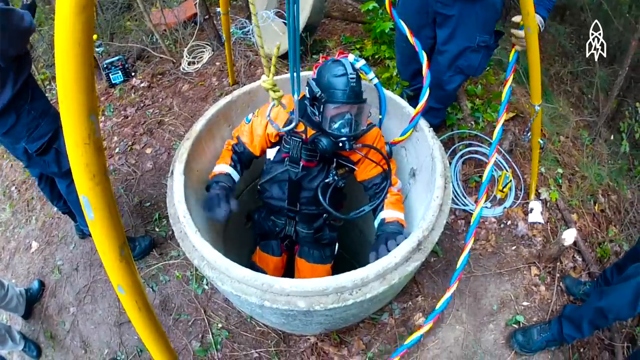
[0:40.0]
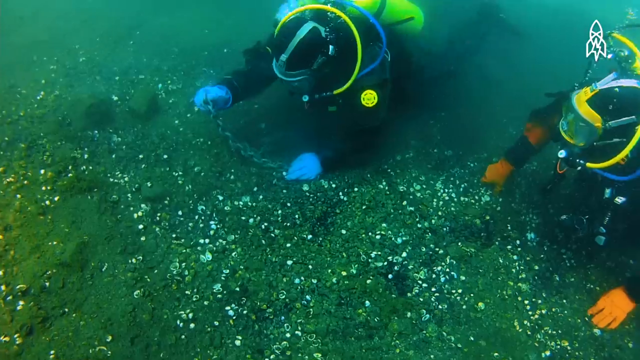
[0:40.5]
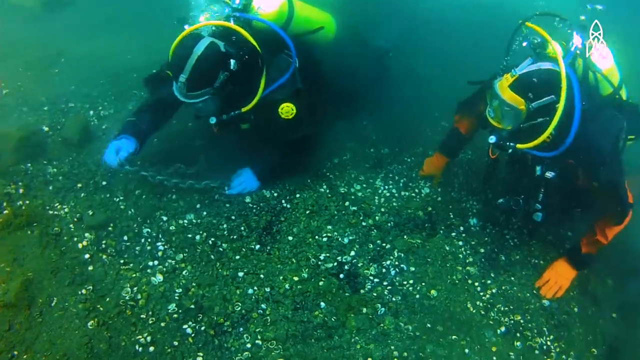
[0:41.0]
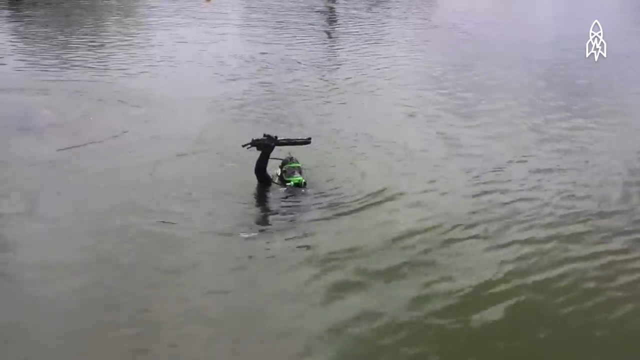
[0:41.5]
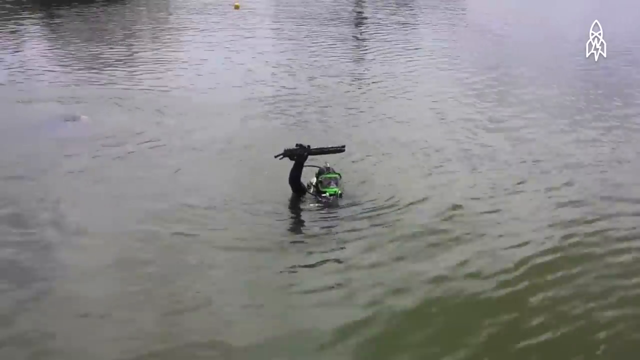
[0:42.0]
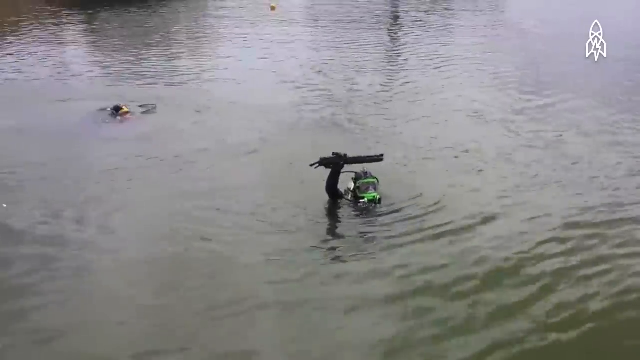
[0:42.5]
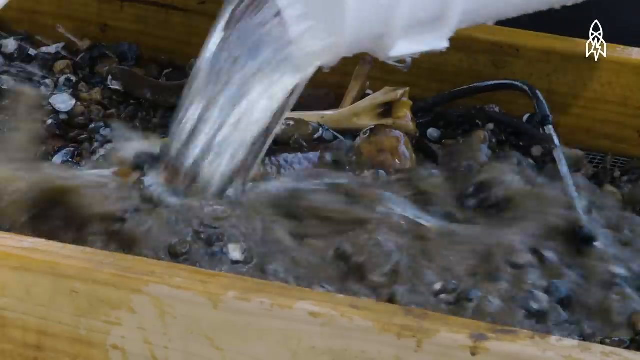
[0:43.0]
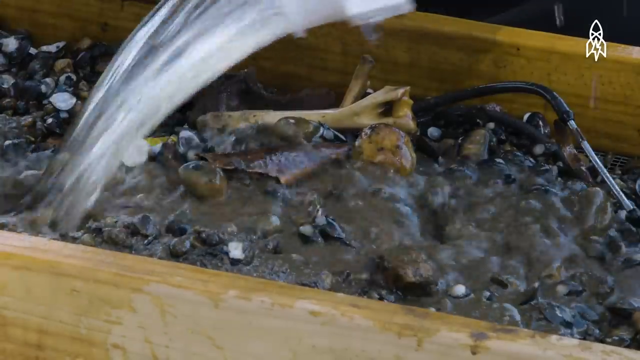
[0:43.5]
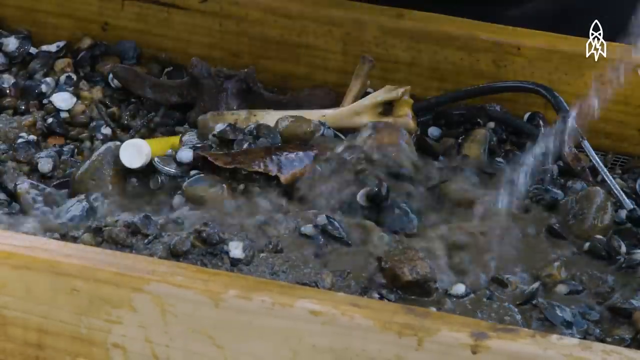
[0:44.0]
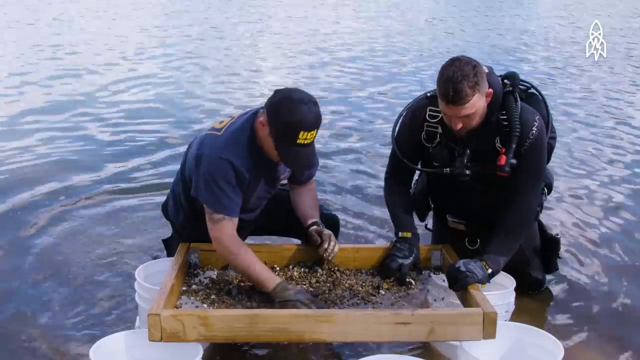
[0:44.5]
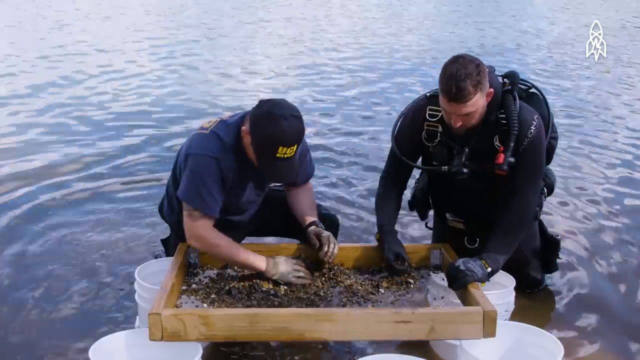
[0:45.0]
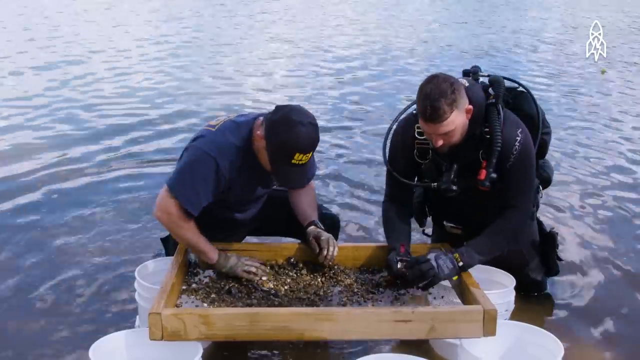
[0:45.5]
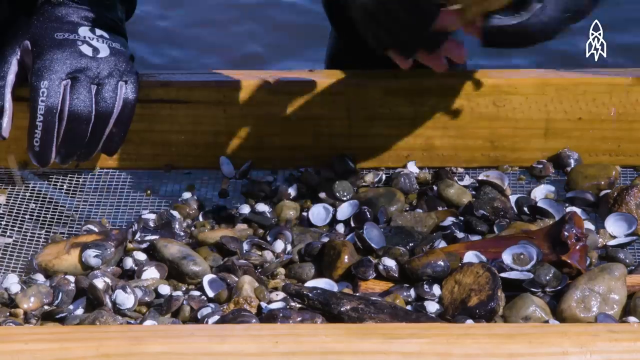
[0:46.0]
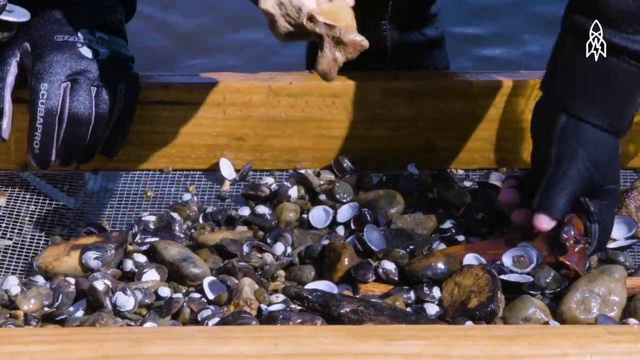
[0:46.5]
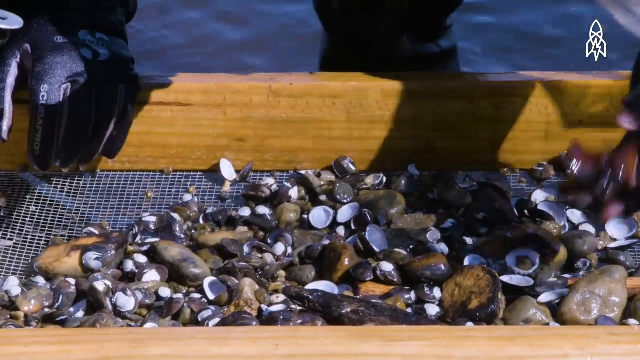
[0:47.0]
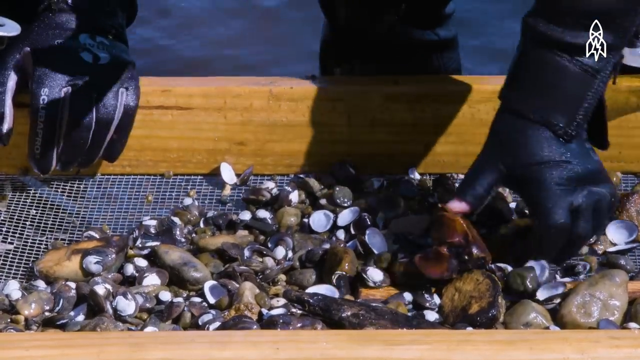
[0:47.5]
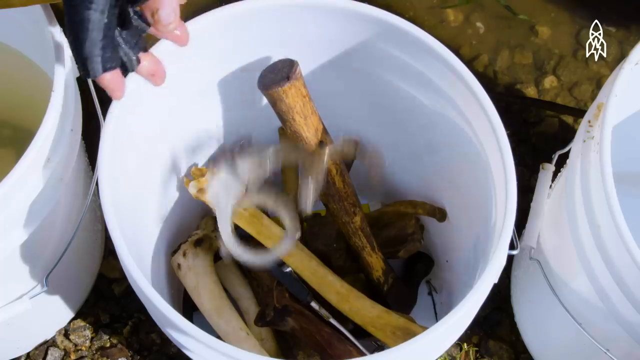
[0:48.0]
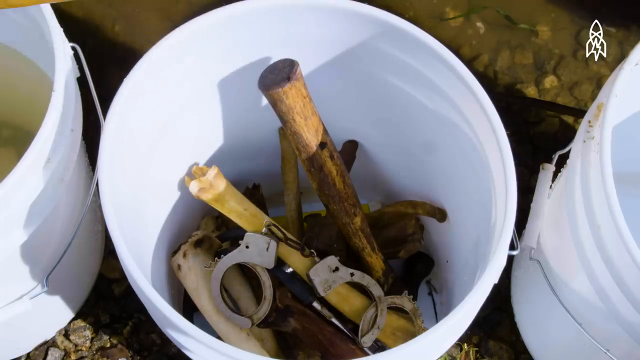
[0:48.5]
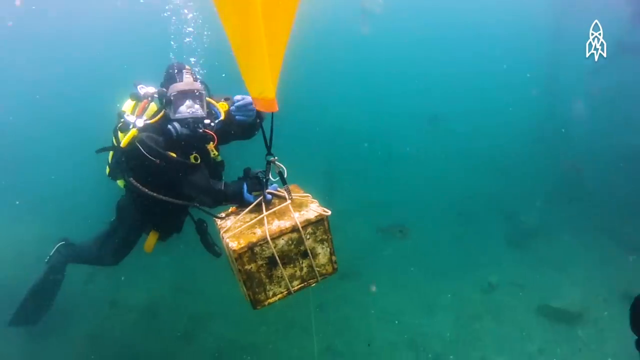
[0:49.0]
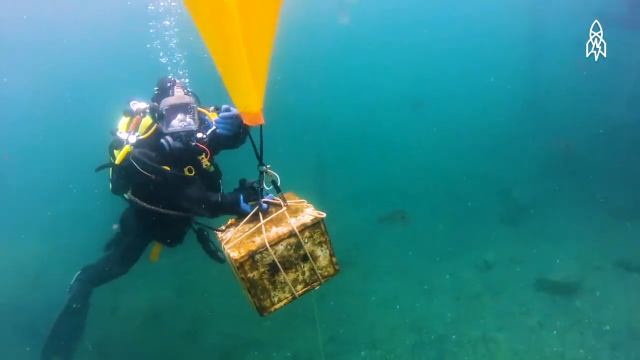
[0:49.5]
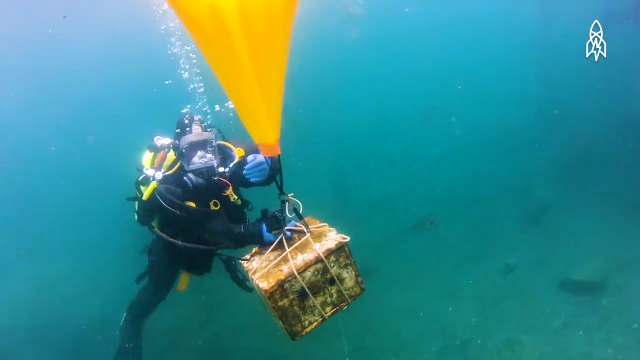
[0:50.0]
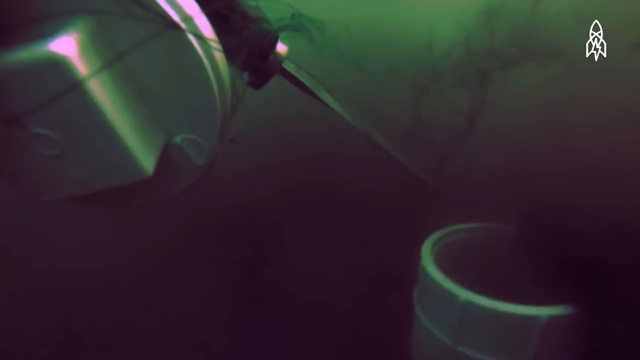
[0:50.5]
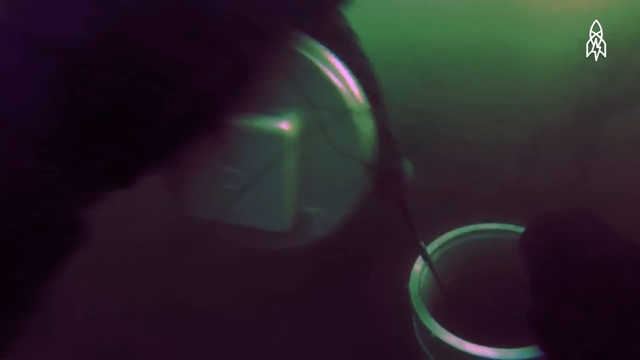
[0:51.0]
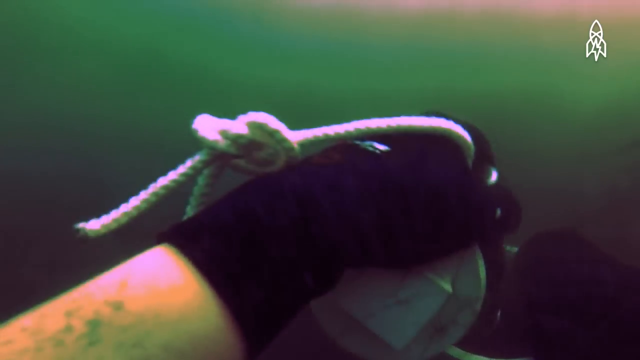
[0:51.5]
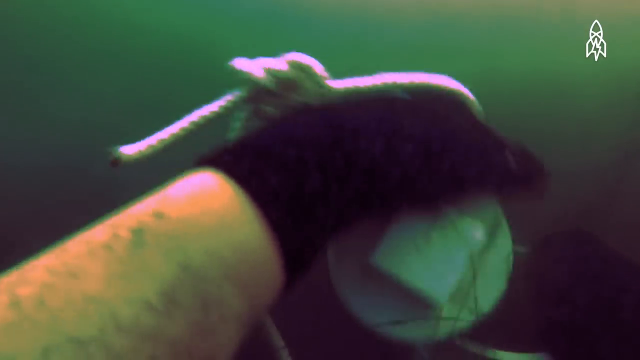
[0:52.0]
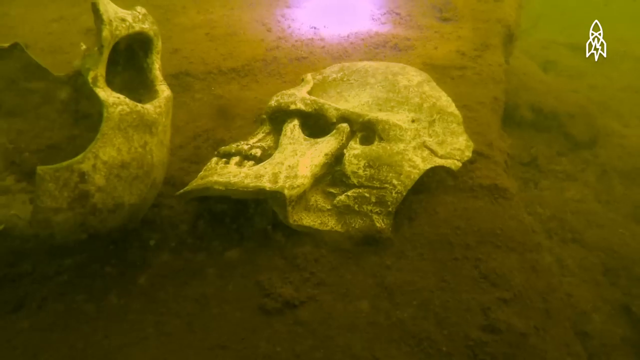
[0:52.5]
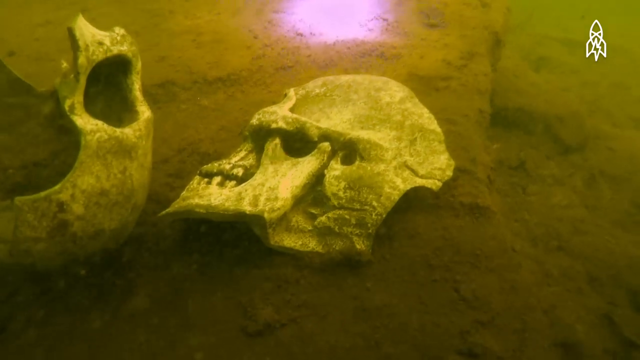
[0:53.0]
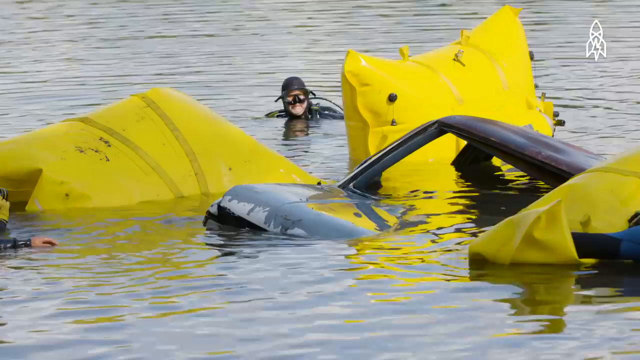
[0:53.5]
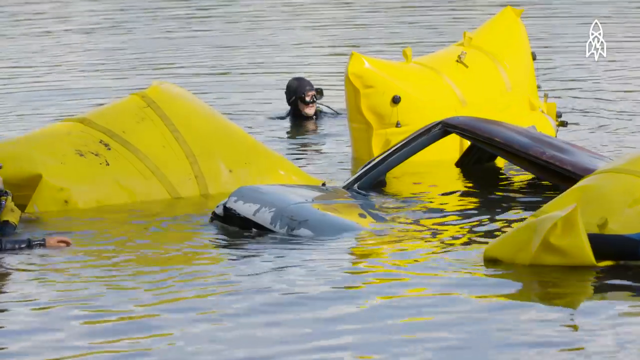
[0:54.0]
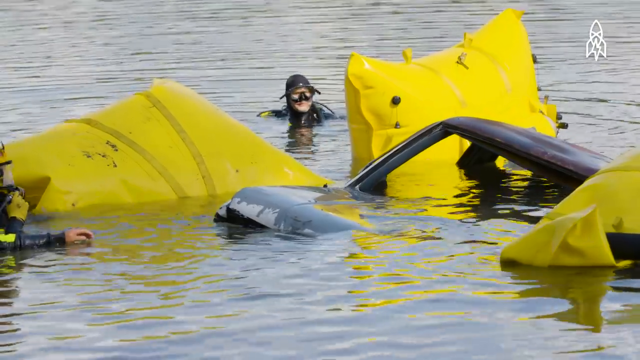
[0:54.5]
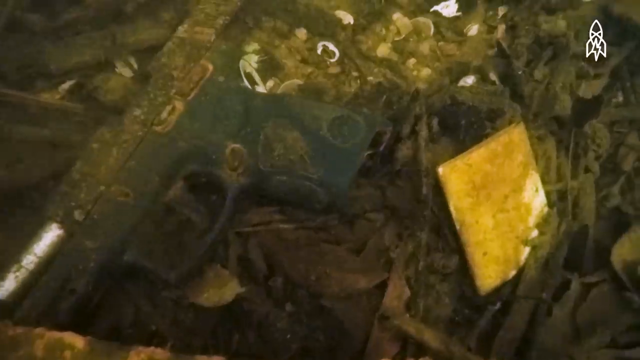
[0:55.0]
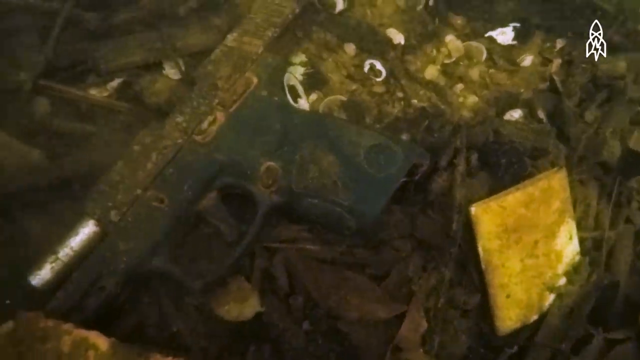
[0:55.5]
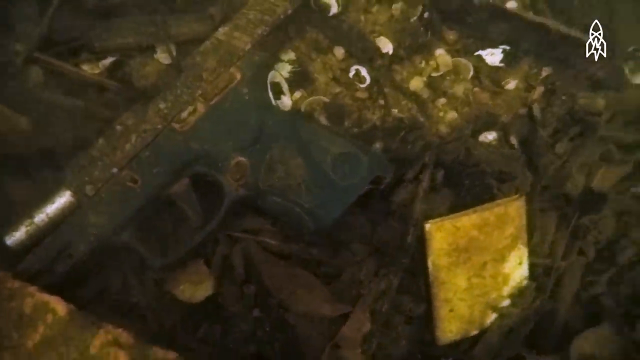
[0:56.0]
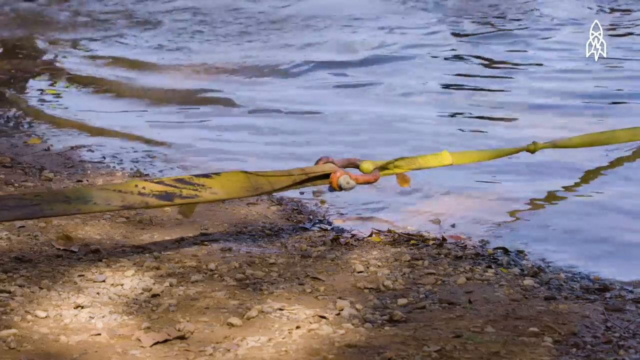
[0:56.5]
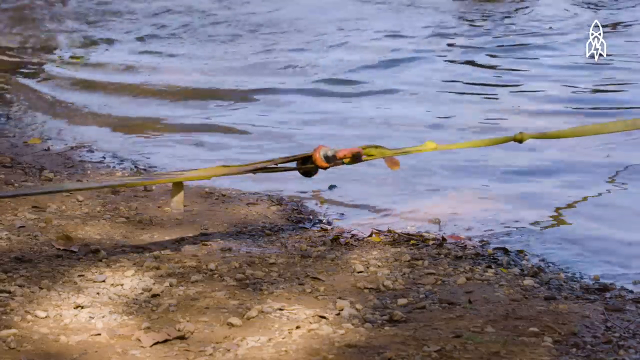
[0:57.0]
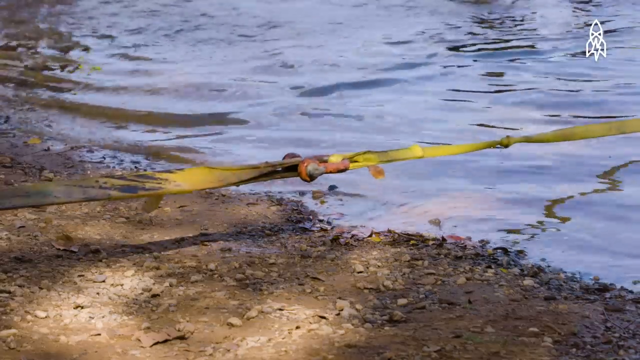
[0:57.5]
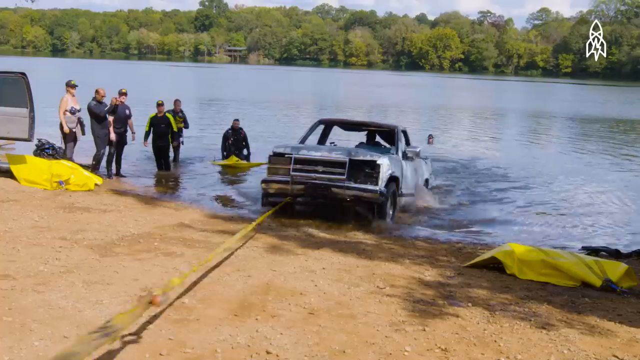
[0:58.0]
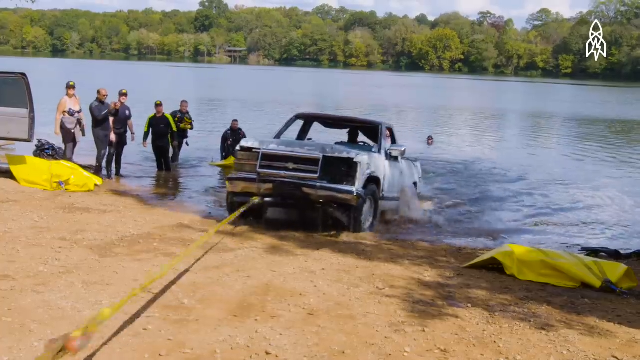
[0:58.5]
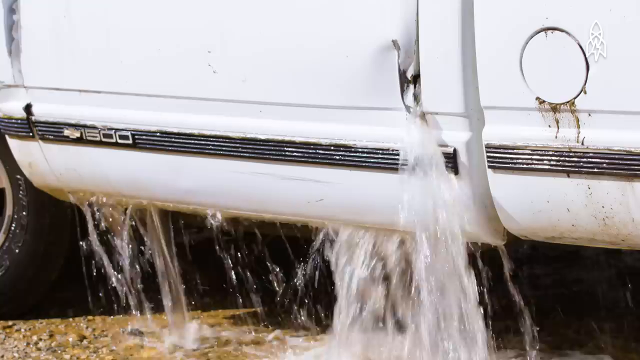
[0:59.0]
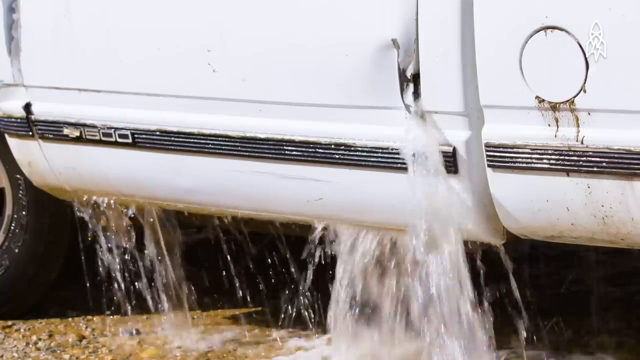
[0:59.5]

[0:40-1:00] Other divers go underwater to dive for evidence. One diver's gear on their hands is black and orange; another's is black and green. They seem to have found the evidence they were looking for, and a diver comes up holding it. The UCI diver examines the evidence next to another diver. A skeleton bone that was found is shown, and the evidence is put inside one white container. The evidence found also includes handcuffs. More divers go back down, even deeper, with their containers to find more evidence. Underwater, skeletons are shown, along with objects like guns and other things.